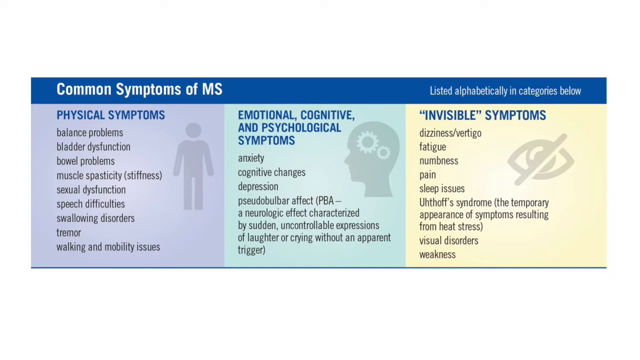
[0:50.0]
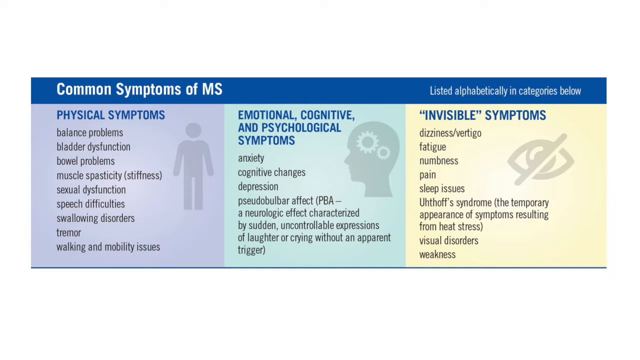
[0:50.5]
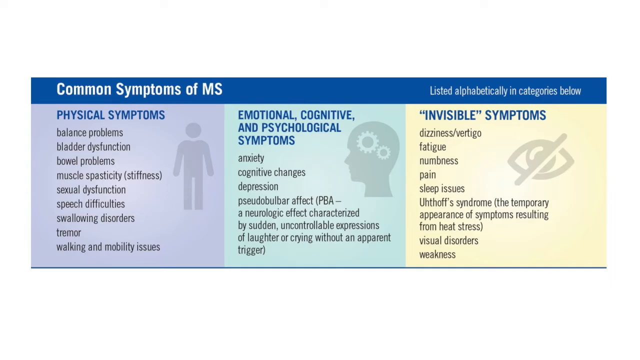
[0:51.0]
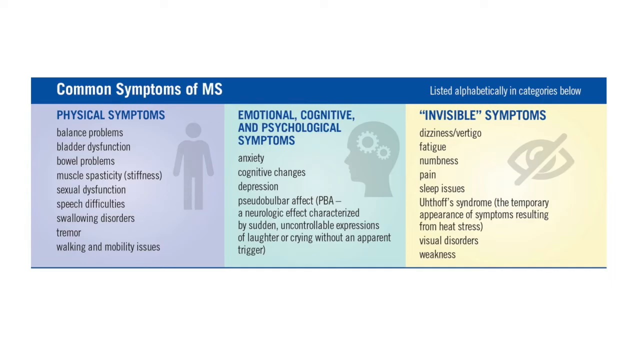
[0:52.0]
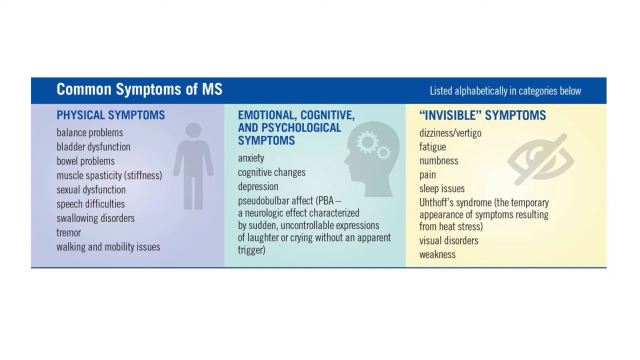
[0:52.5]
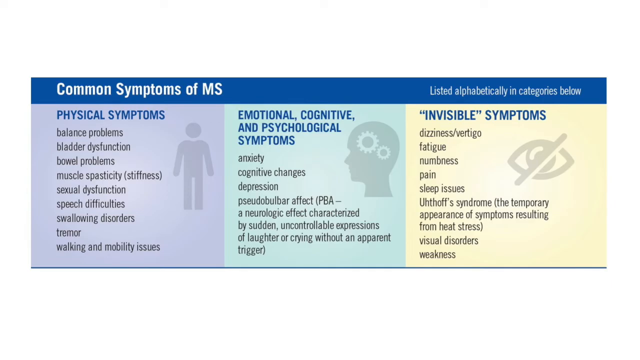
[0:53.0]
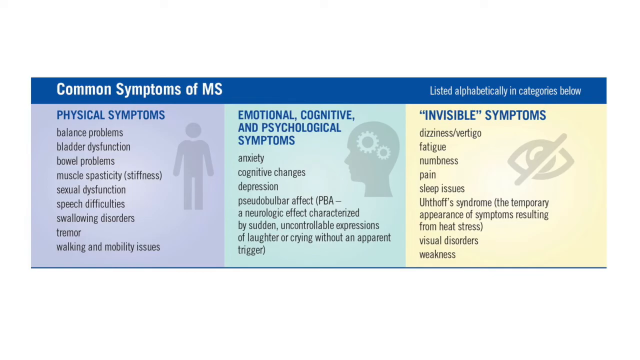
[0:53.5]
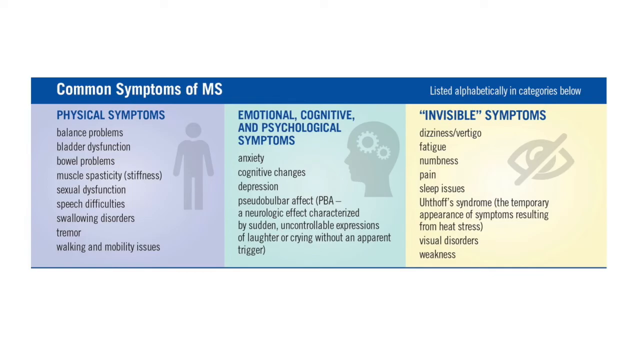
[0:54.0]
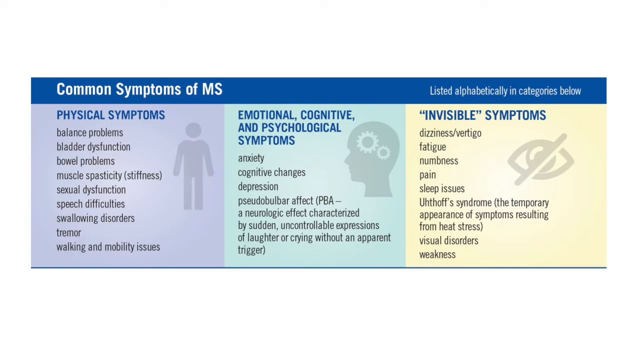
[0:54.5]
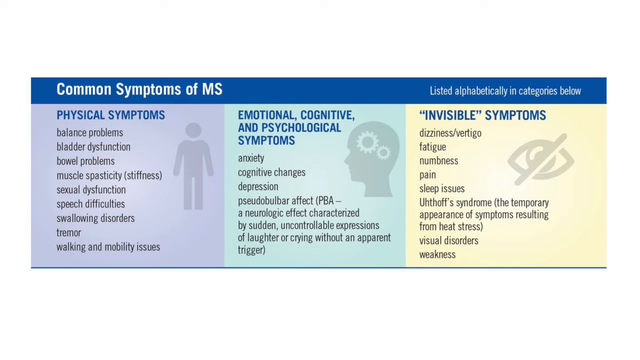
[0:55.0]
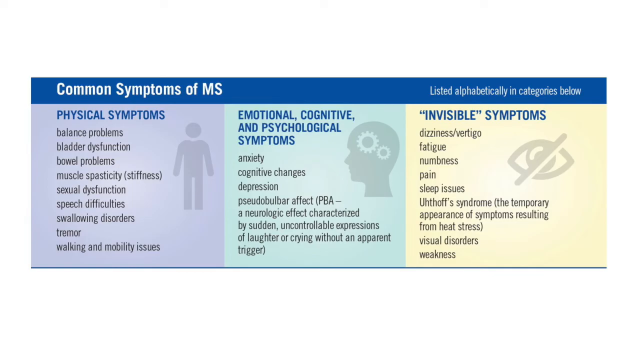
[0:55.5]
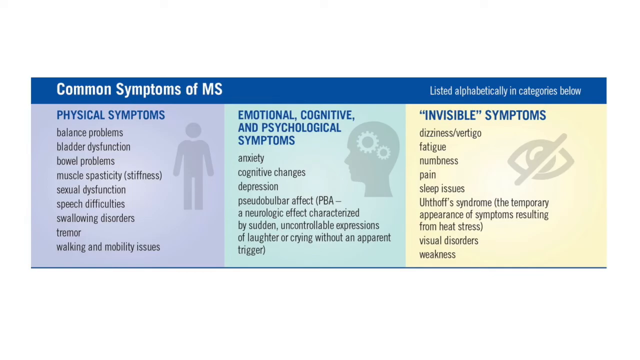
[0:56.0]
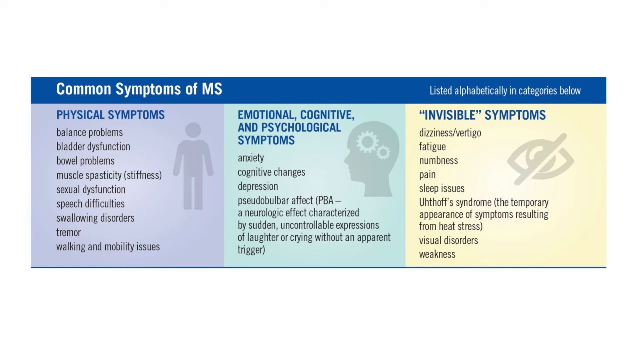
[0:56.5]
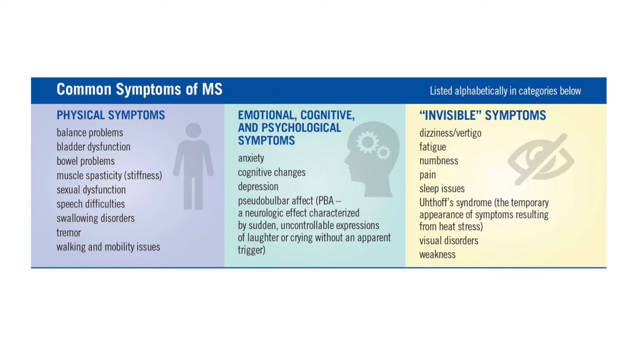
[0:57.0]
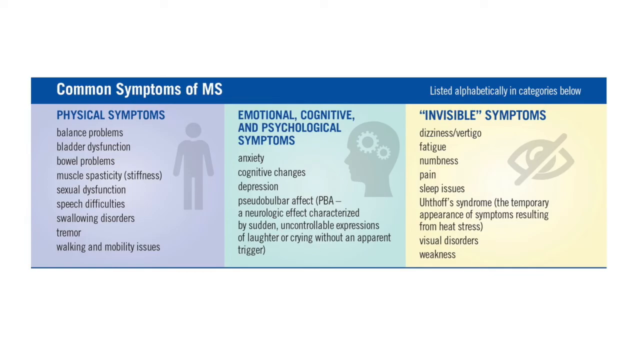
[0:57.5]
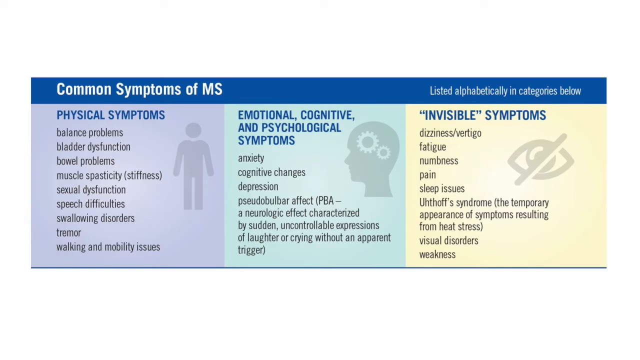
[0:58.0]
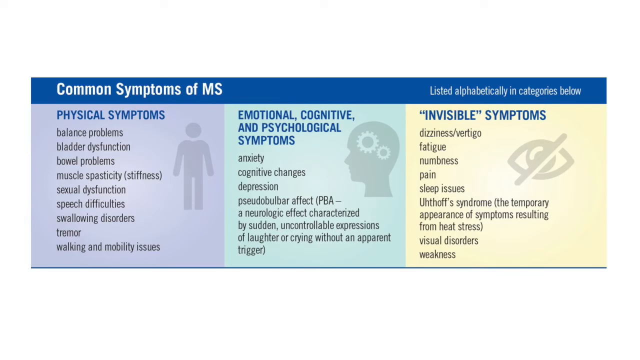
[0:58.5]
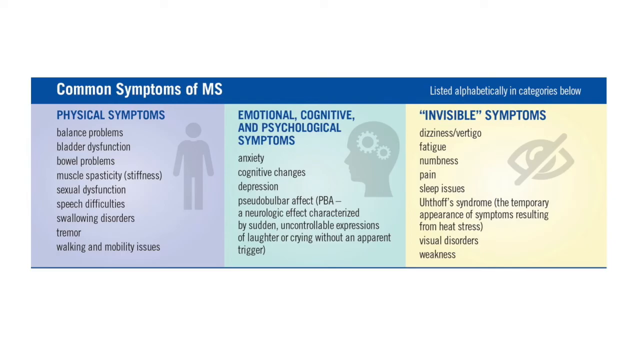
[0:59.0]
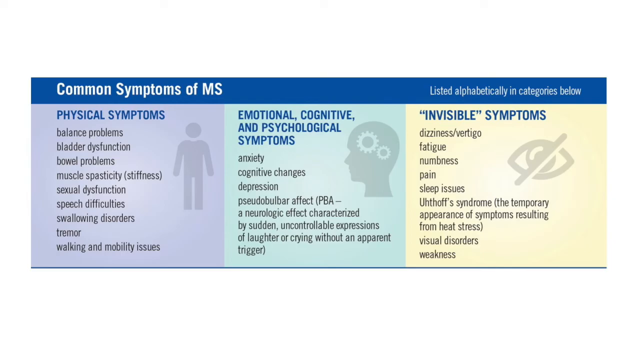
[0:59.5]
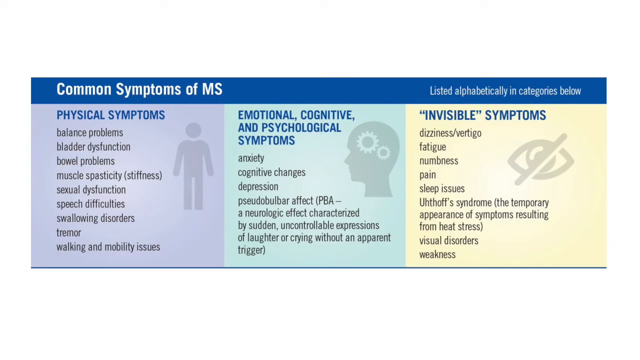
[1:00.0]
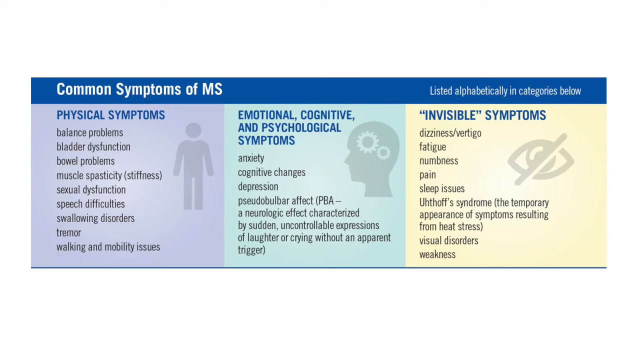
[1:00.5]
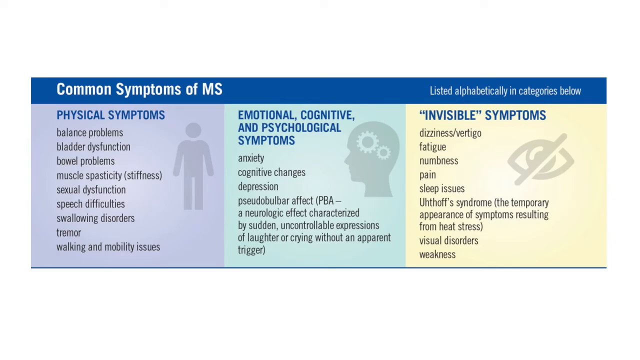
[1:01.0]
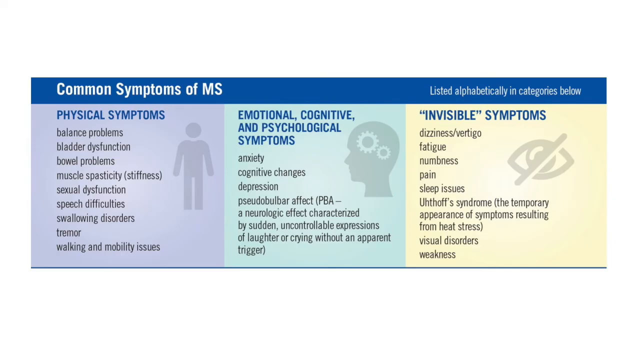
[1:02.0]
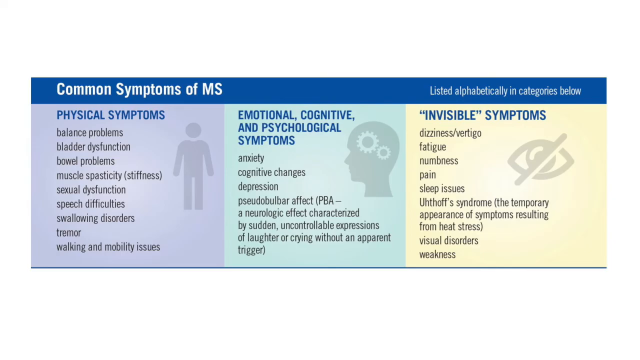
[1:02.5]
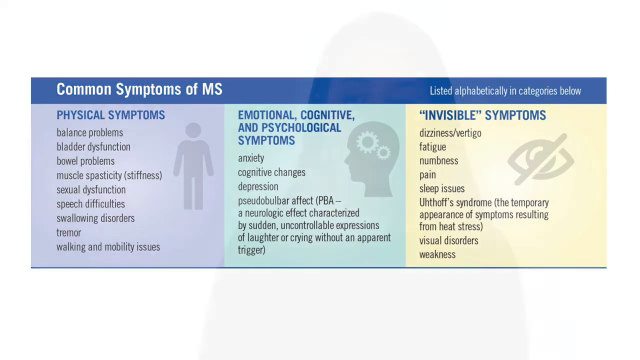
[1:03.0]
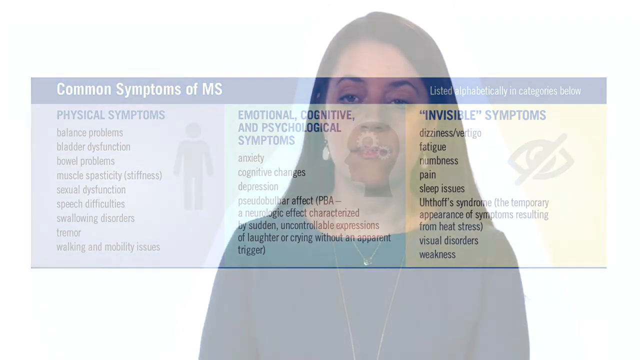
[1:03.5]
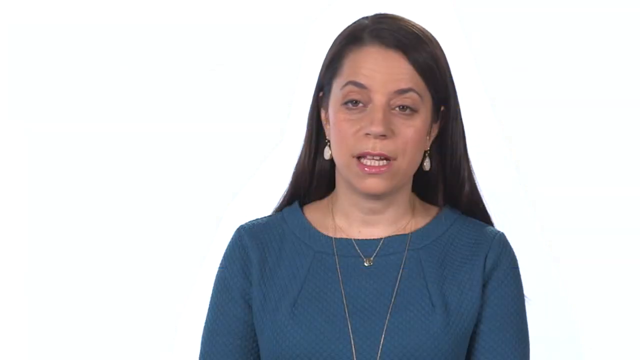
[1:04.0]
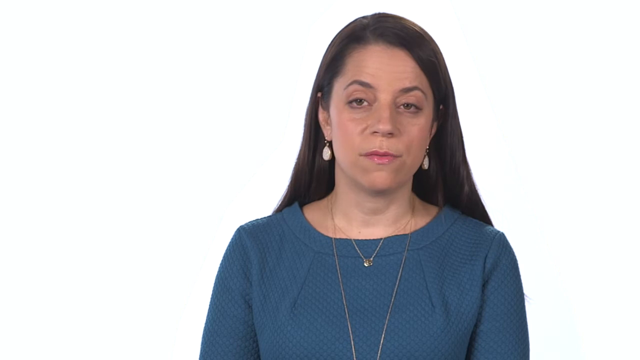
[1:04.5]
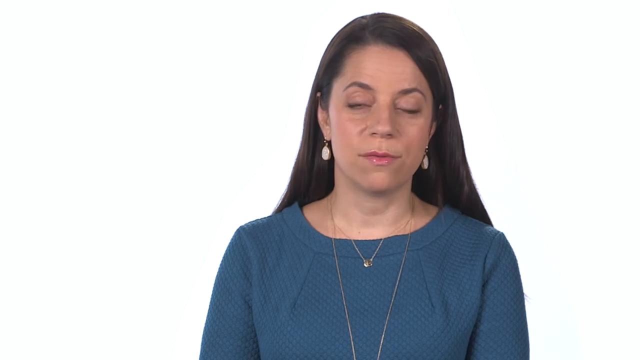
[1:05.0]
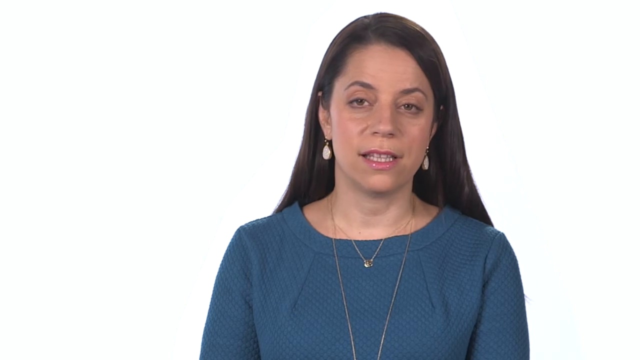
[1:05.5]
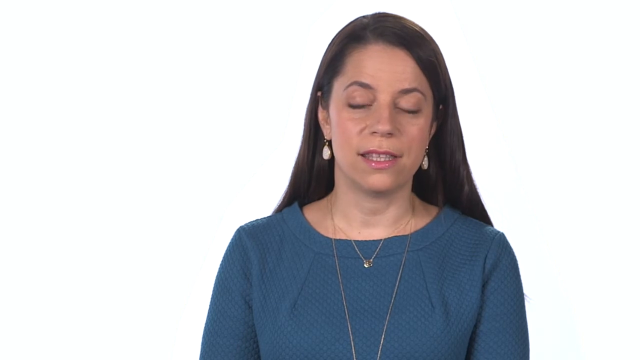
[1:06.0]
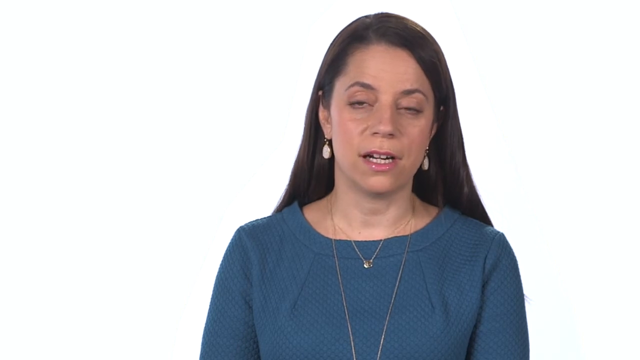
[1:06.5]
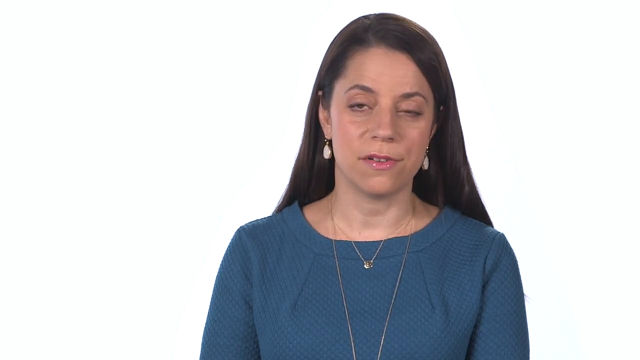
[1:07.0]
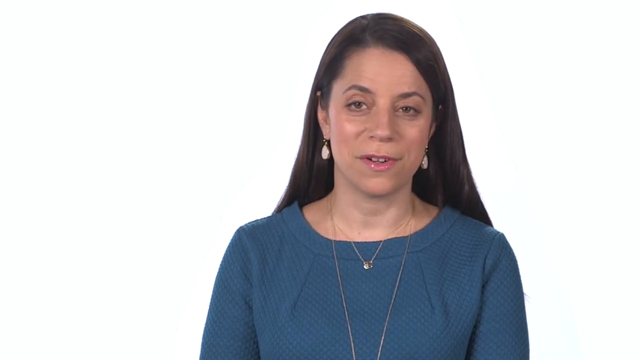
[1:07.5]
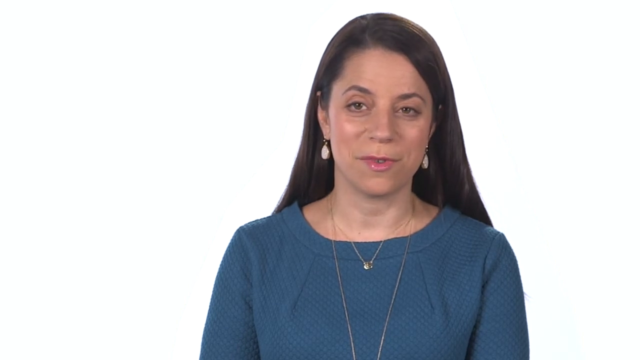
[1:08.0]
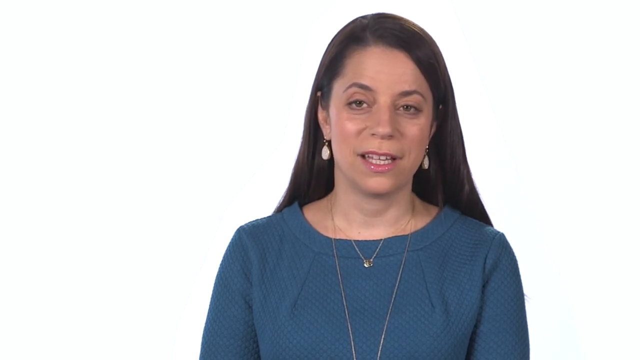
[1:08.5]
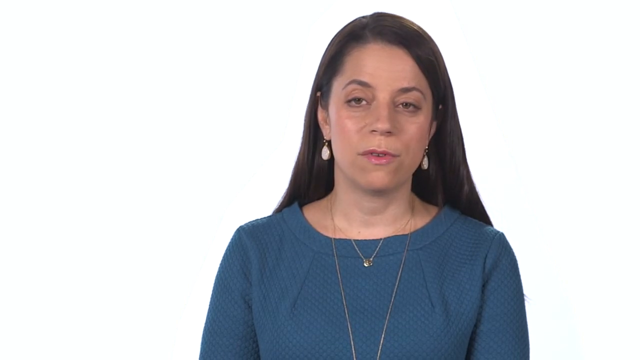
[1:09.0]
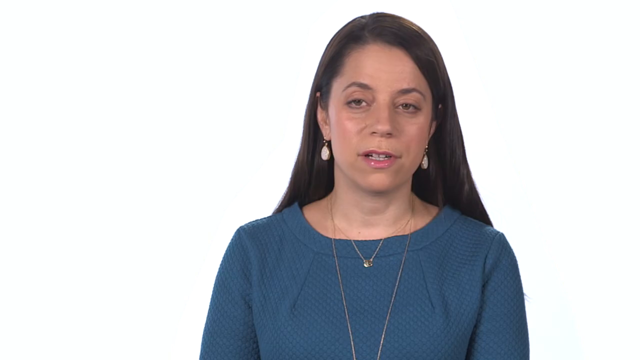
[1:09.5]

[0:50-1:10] The graphic labeled "Common Symptoms of MS" appears, with the title in a blue bar across the top and "listed alphabetically in categories below" on the right. On the left, under "Physical Symptoms", it lists "Balance Problems, Bladder Dysfunction, Bowel Problems, Muscle Spasticity, Stiffness, Sexual Dysfunction, Speech Difficulties, Swallowing Disorders, Tremor, Walking and Mobility Issues", with a gray graphic of a person like one seen on a restroom sign. The center reads "Emotional, Cognitive, and Psychological Symptoms" and lists "Anxiety, Cognitive Changes, Depression, Pseudobulbar Affect, PBA" and a neurological effect characterized by sudden uncontrollable expressions of laughter or crying without an apparent trigger, with a graphic of a human head in profile with two gears. The last column on the right, against yellow, reads "Invisible Symptoms" and lists "Dizziness, Vertigo, Fatigue, Numbness, Pain, Sleep Issues, Uhthoff's Syndrome, the temporary appearance of symptoms resulting from heat stress, visual disorders, and weakness", with a graphic of a human eye with a cross outline through it. The video then changes to the doctor. She wears a teal blue top and two necklaces: a shorter chain at her neck with a pendant, and a longer one whose pendant cannot be seen. She has white drop earrings and long dark hair parted to the right-hand side, and she has brown skin.